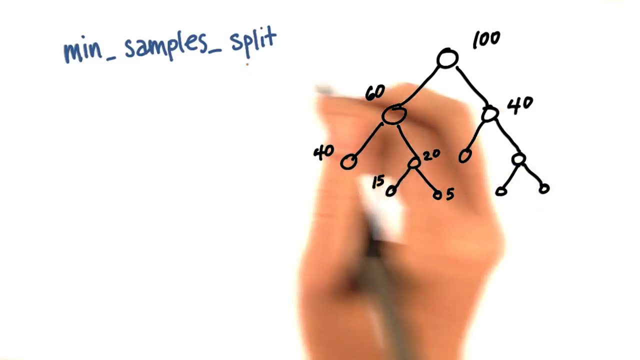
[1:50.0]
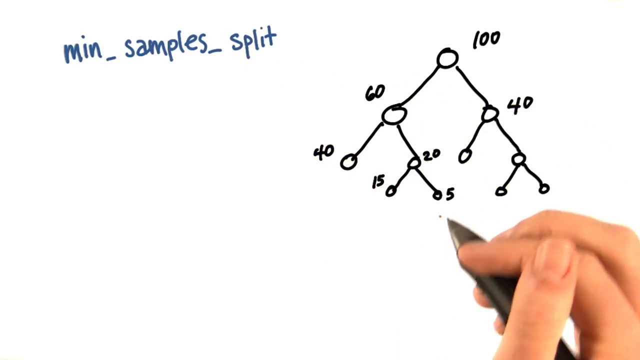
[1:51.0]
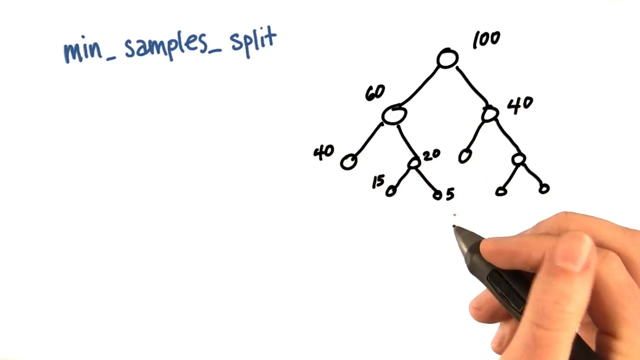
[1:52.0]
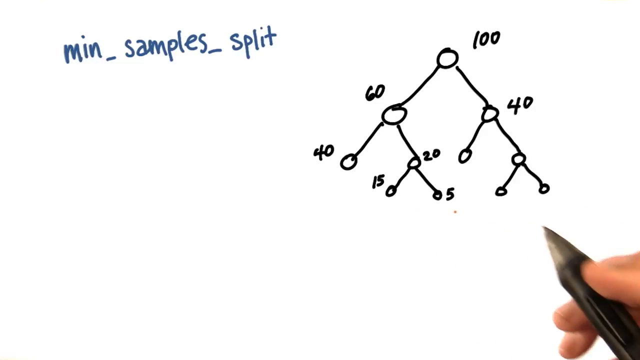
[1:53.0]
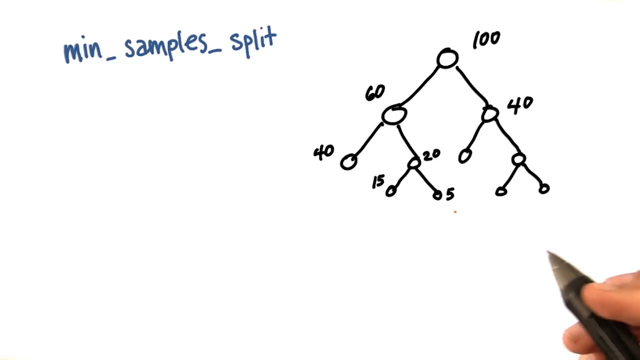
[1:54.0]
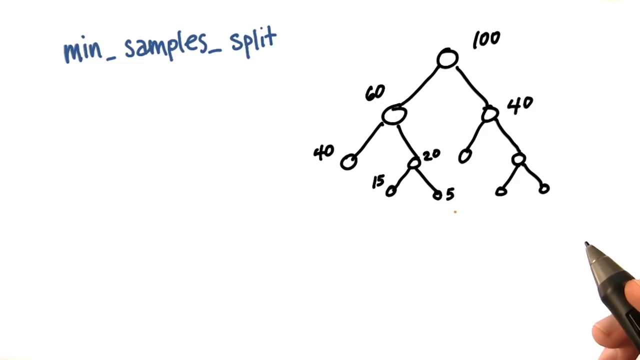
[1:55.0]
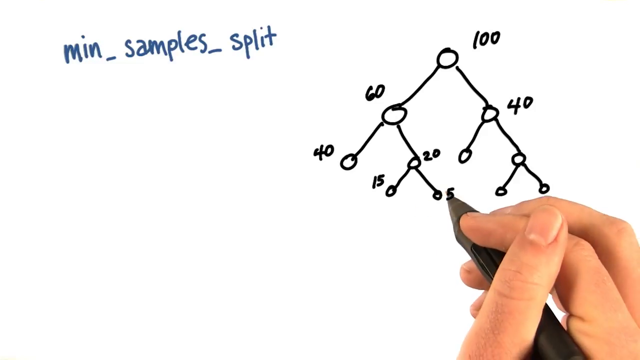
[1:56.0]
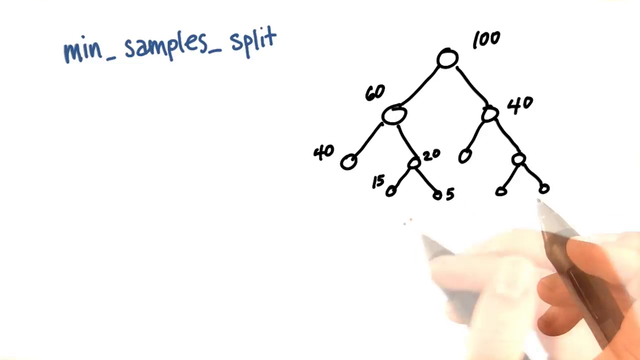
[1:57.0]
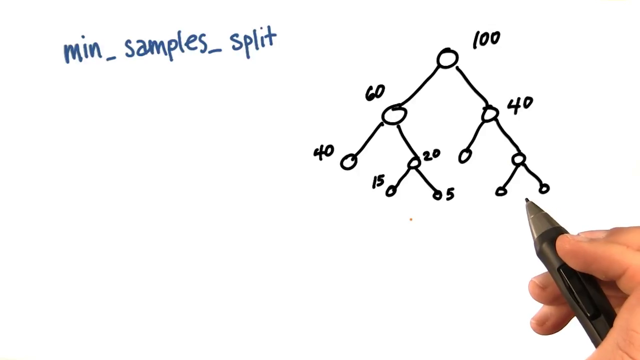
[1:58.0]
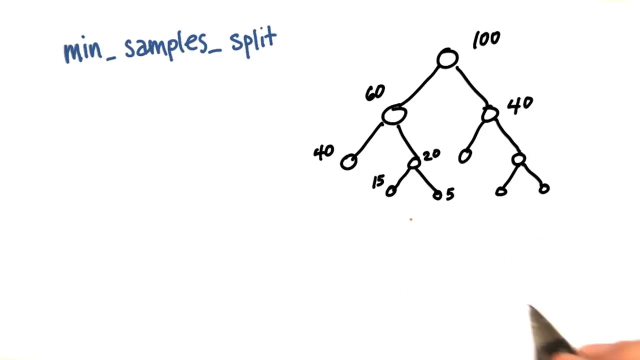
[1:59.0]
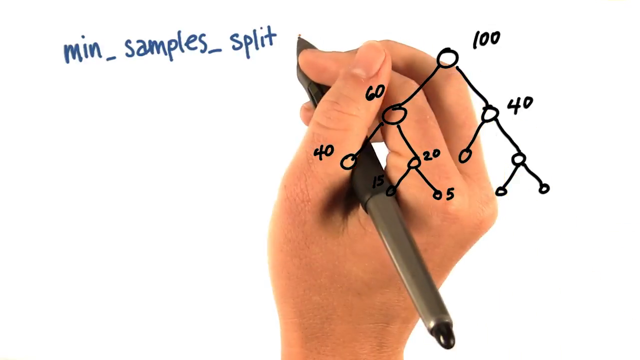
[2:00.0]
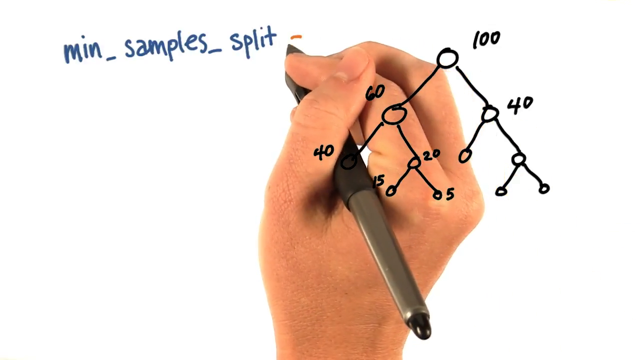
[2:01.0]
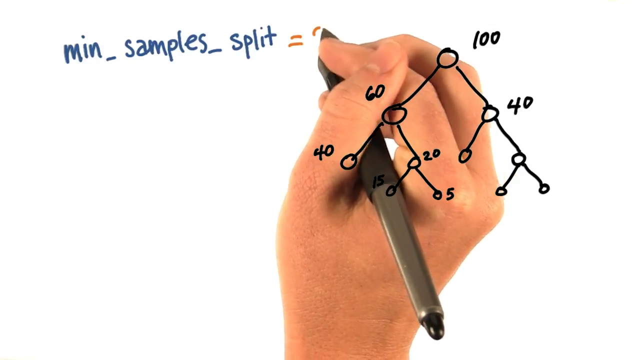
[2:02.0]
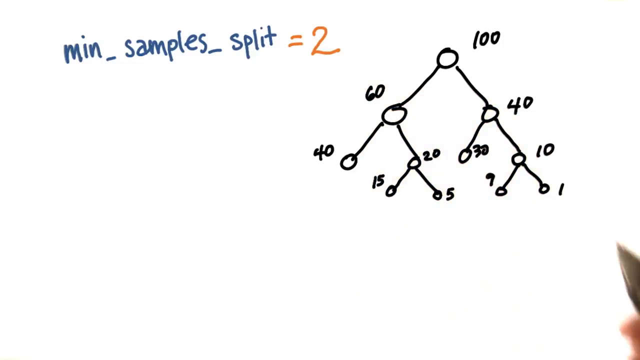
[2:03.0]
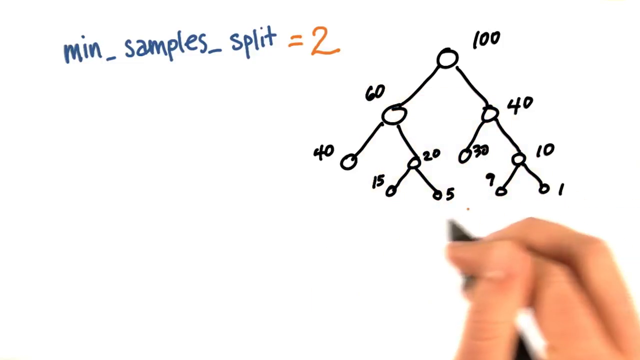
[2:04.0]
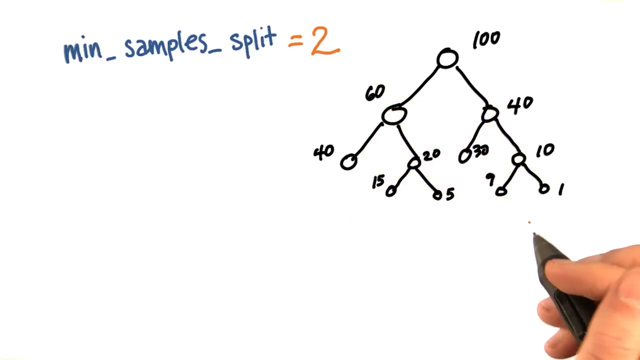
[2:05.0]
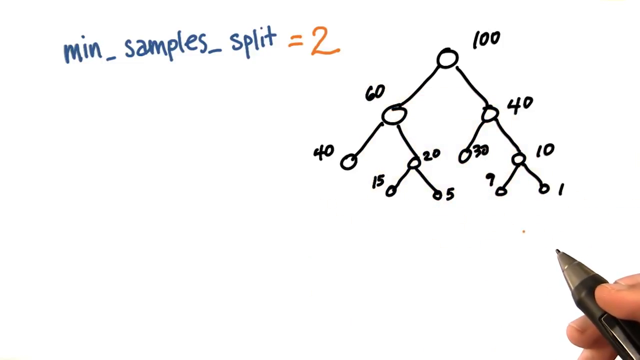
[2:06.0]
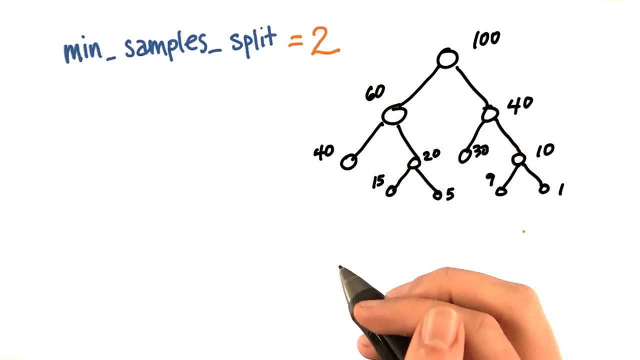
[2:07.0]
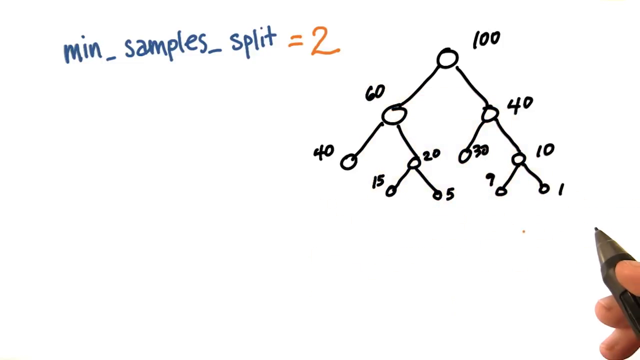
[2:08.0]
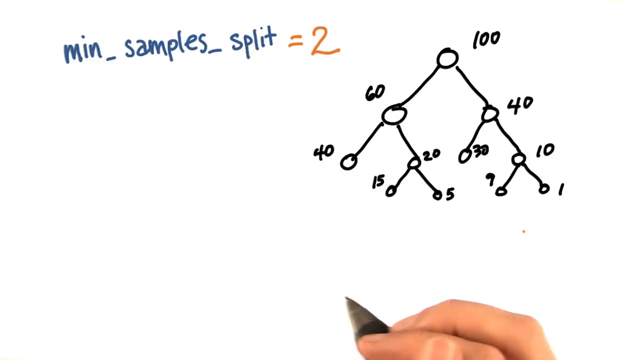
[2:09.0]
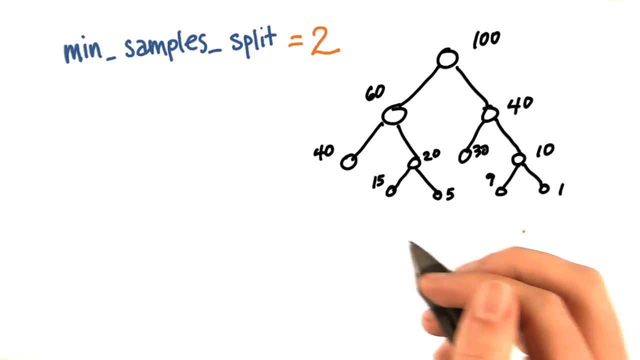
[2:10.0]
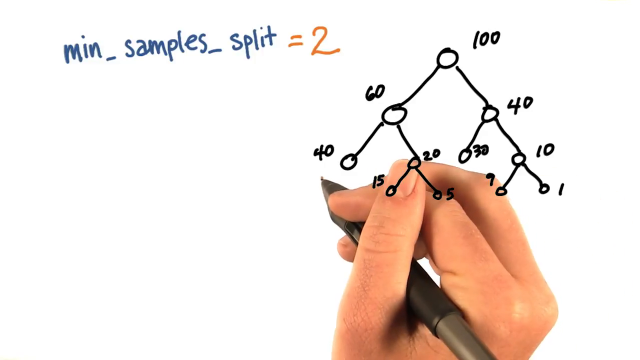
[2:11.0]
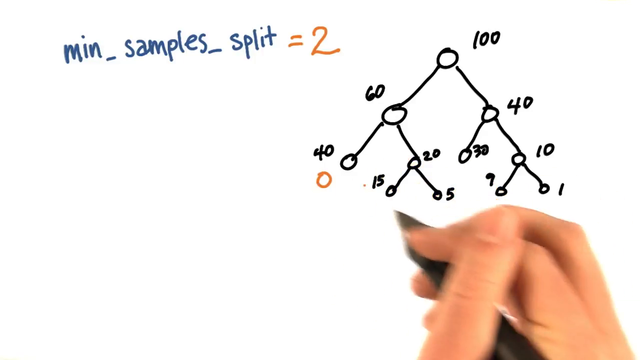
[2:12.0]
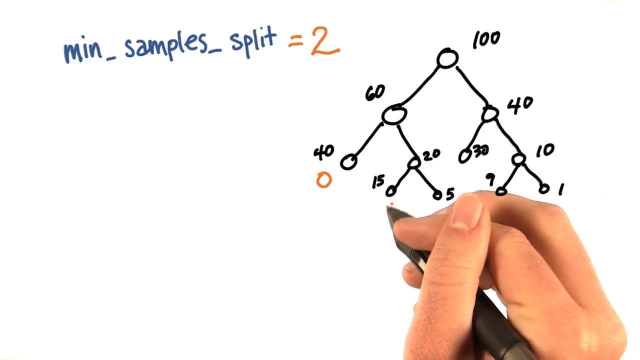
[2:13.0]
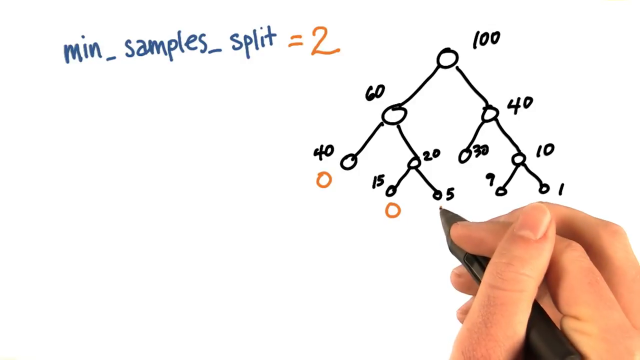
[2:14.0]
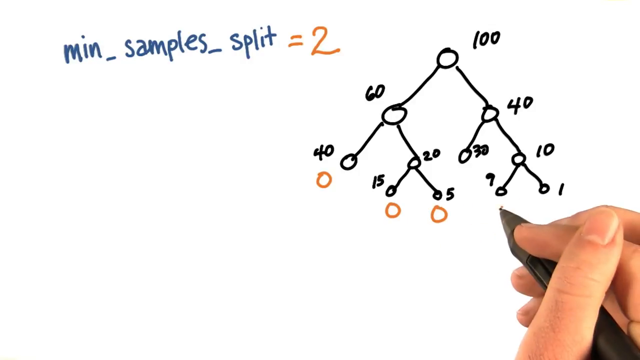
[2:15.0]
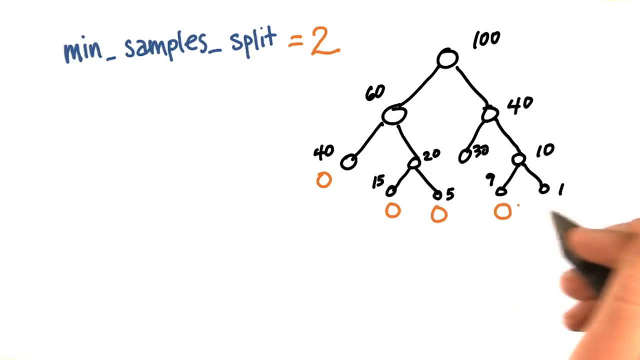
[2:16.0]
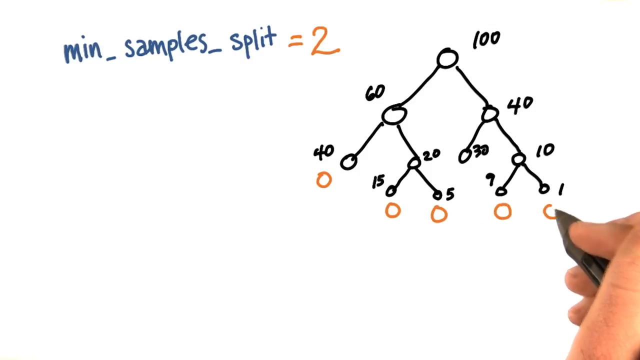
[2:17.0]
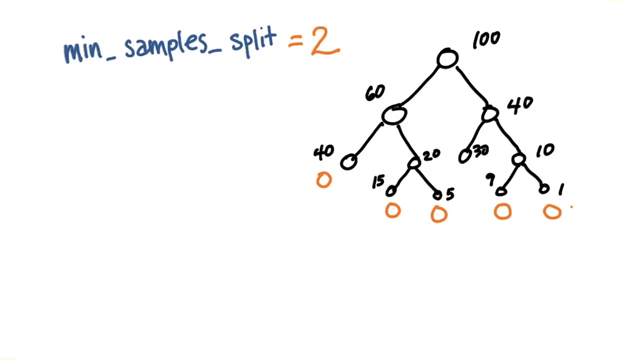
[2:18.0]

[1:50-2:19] The person continues hovering and gesturing with the pen. Next to "min sample split" at the top left, they write "= 2" in orange. At the bottom, on the remaining nodes without numbers, the right node of the node labeled 40 is labeled 10; node 10's right node is labeled 1 and its left node 9. The left node of node 40 is labeled 30. After more gesturing, he draws small orange circles below the nodes labeled 40, 15, 5, 9 and 1. Nothing else is marked in the diagram, and there is a big empty space at the bottom left. The video ends after these circles are drawn.